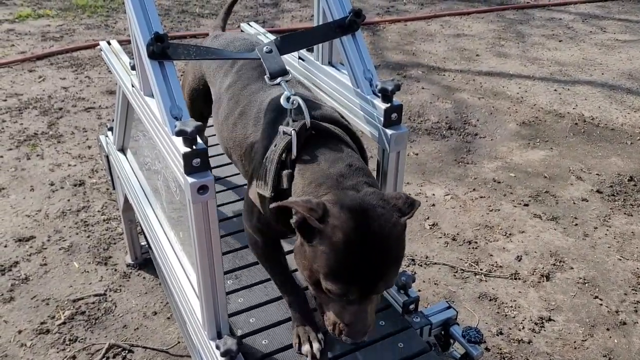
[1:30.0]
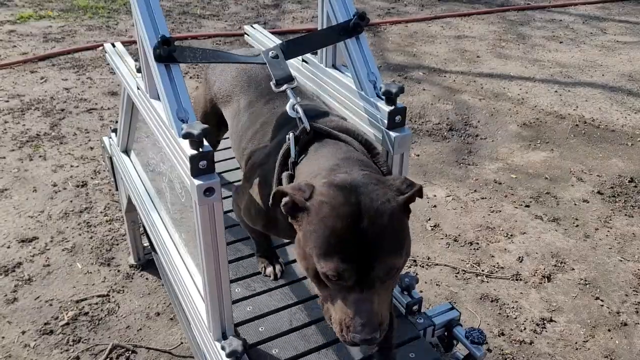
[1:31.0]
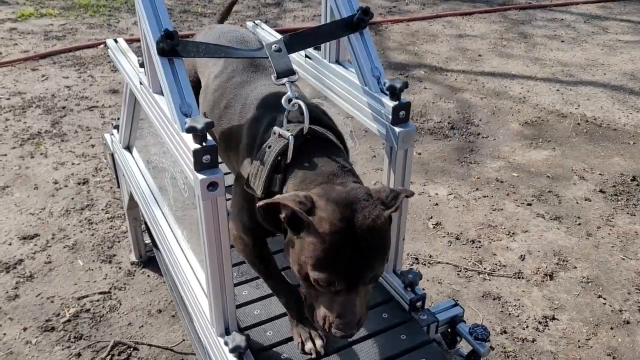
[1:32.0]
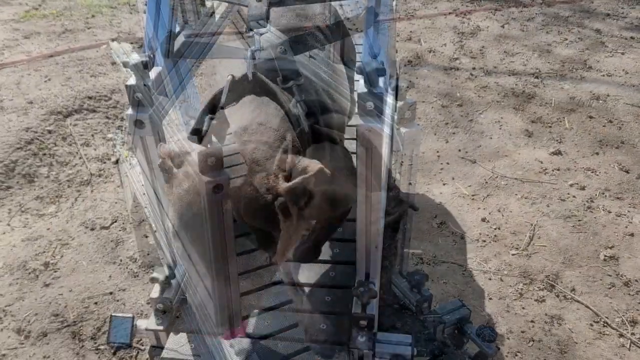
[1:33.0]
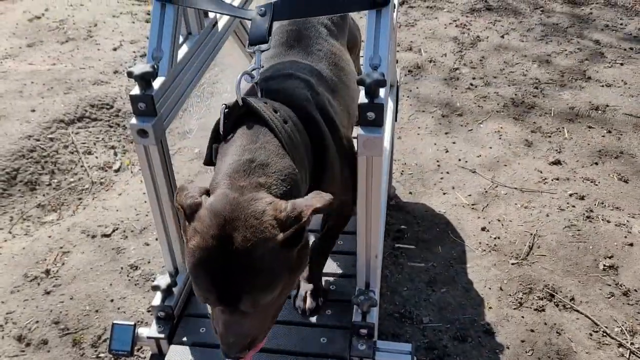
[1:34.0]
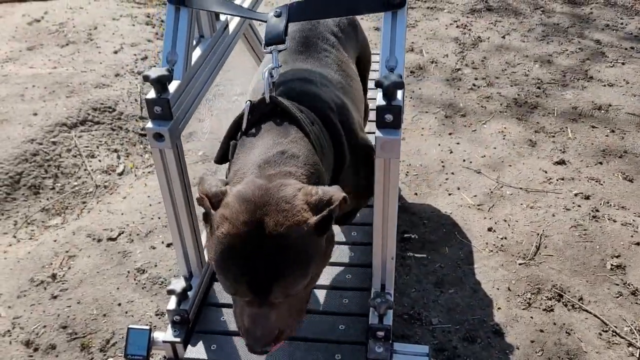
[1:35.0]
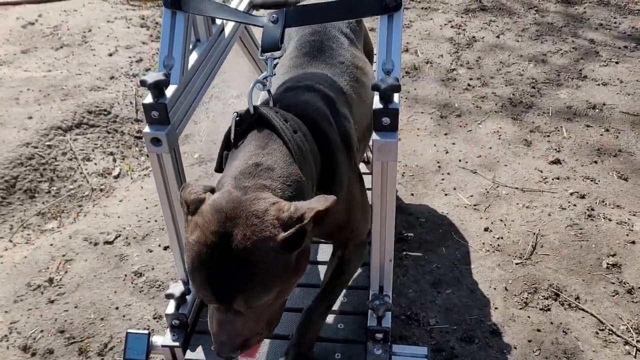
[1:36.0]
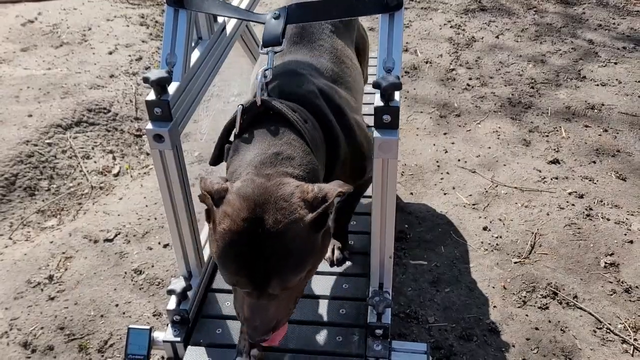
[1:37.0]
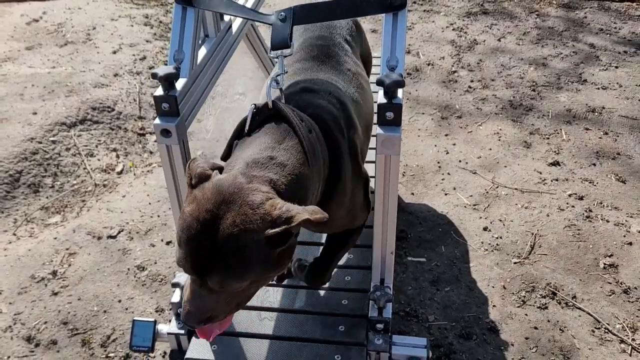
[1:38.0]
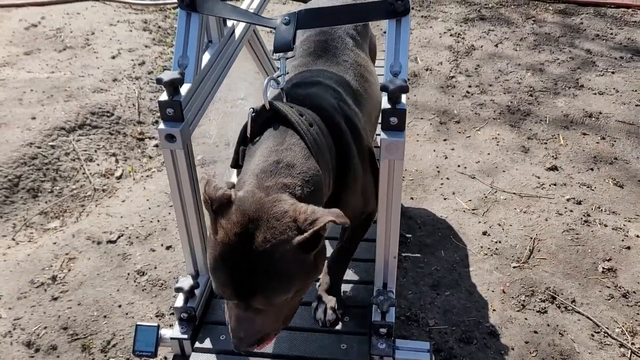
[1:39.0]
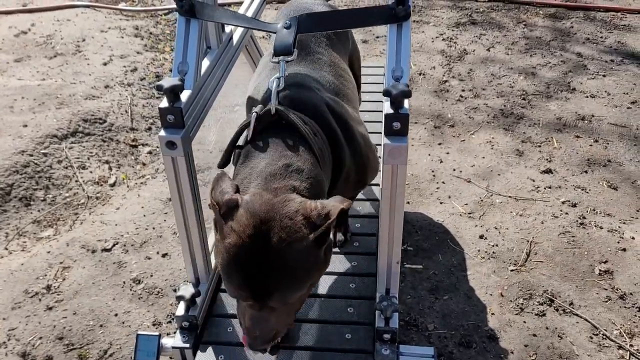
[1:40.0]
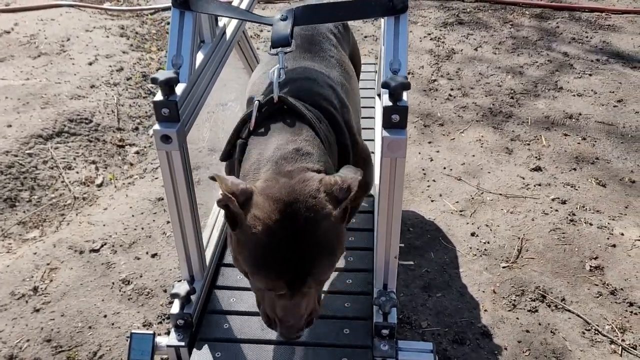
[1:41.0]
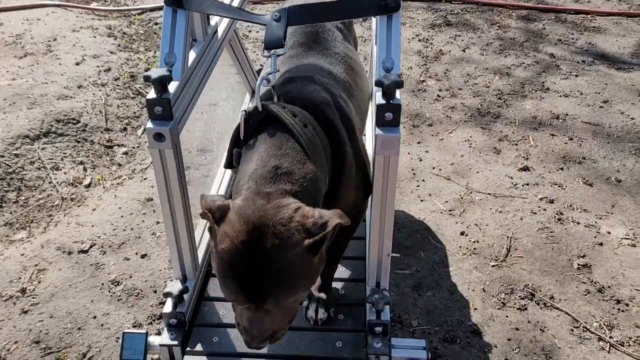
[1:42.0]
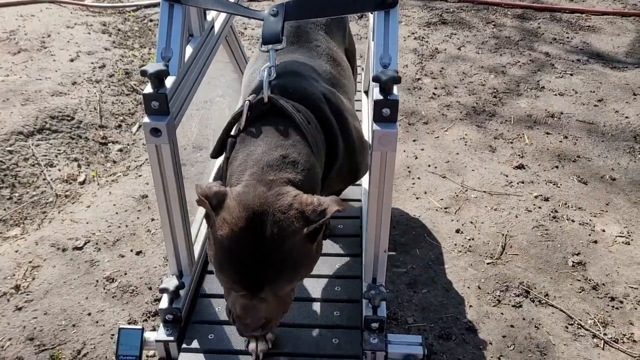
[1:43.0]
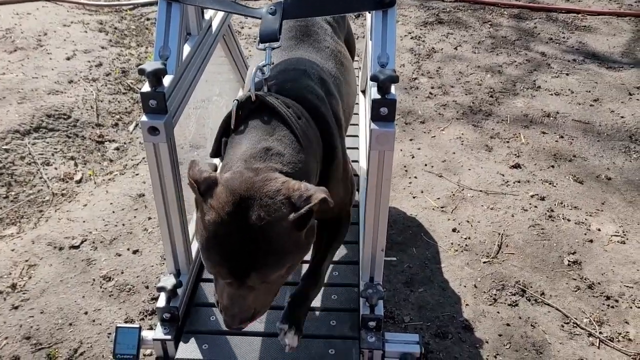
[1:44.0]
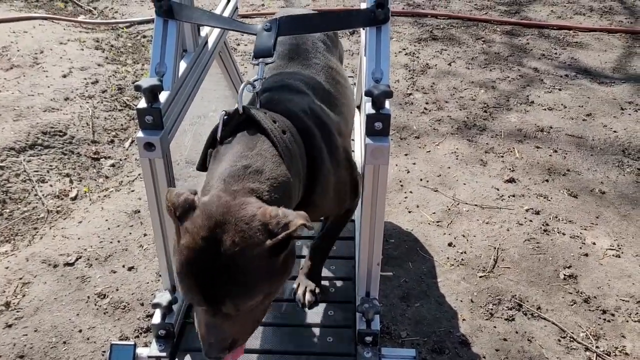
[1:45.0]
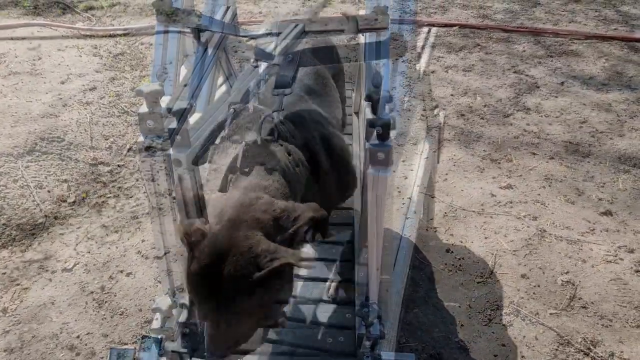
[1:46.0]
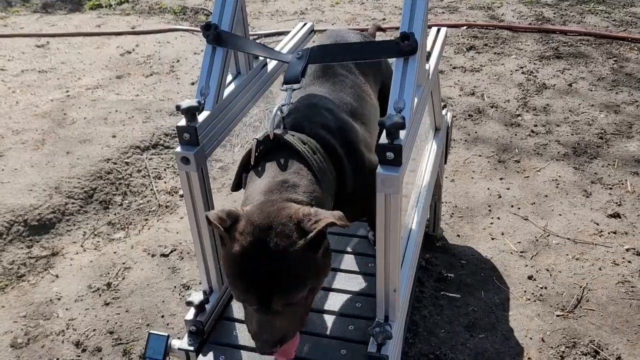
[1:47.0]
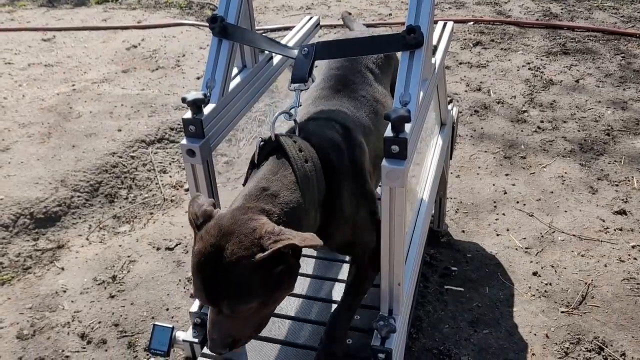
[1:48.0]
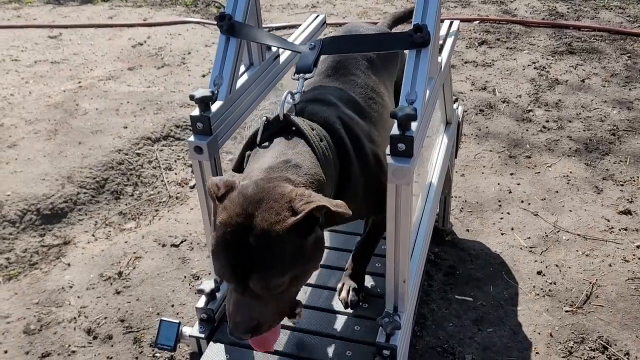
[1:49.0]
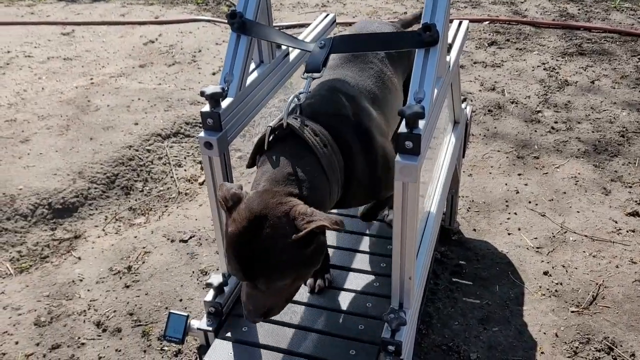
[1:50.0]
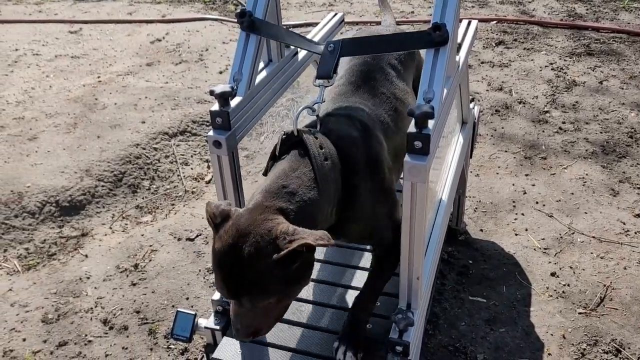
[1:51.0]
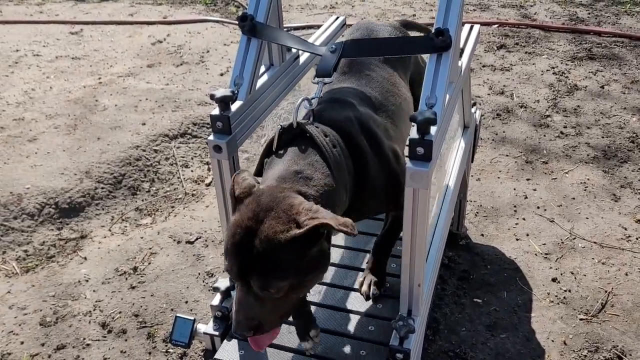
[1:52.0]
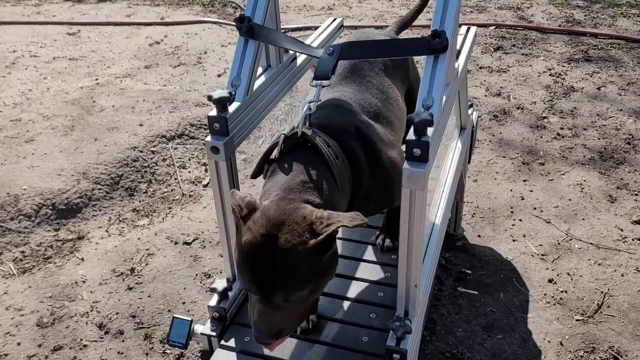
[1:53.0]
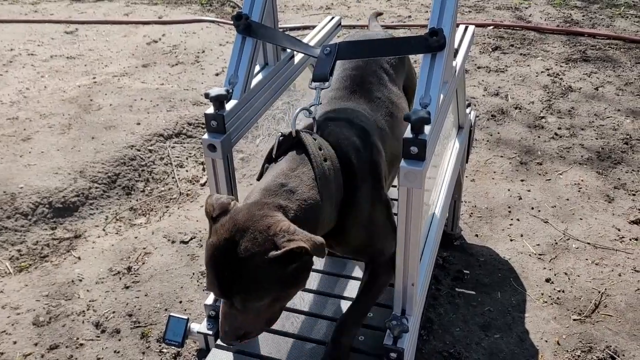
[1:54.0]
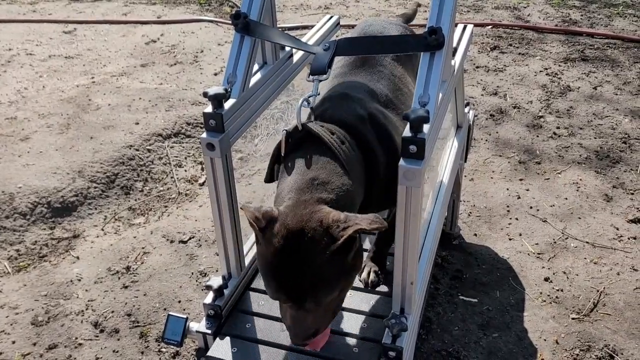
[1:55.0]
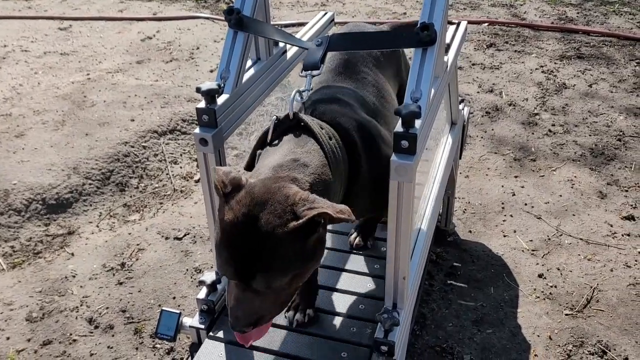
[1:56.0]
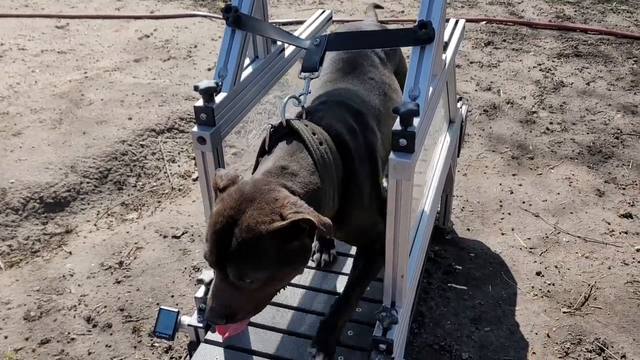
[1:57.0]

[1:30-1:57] The dog keeps running on the treadmill and looks tired, its pace having slowed. With its mouth open, it appears to be panting heavily. The treadmill looks very short and is stainless in colour. A blue rail across both sides of it is used to chain the dog to the treadmill.